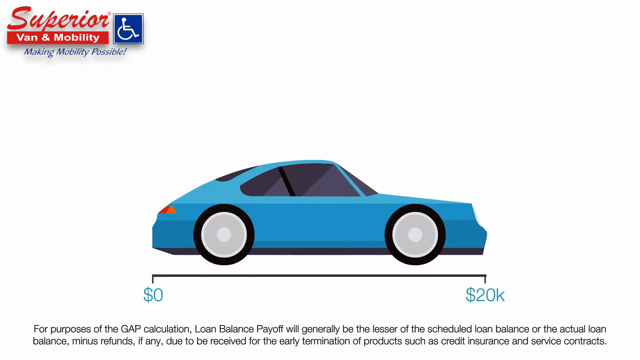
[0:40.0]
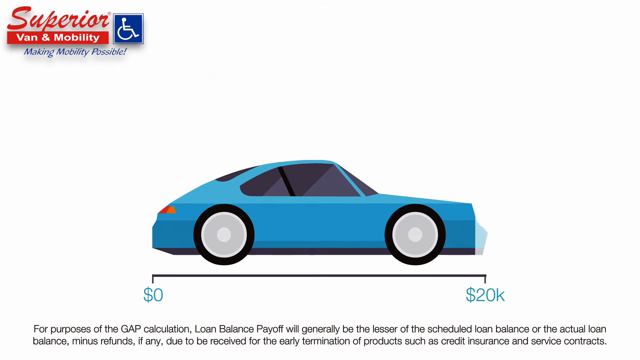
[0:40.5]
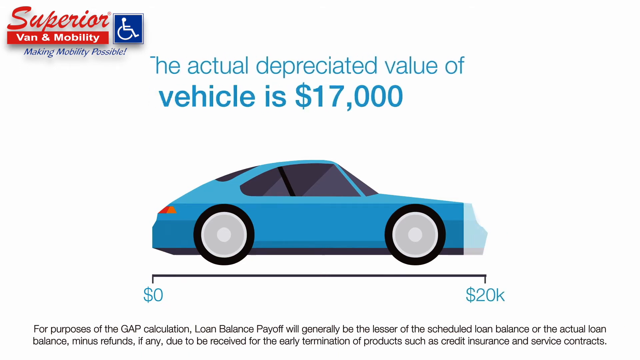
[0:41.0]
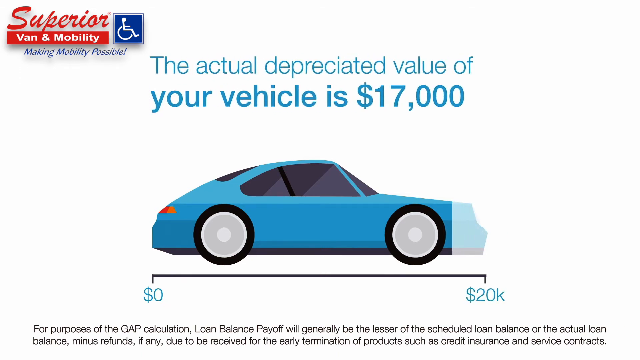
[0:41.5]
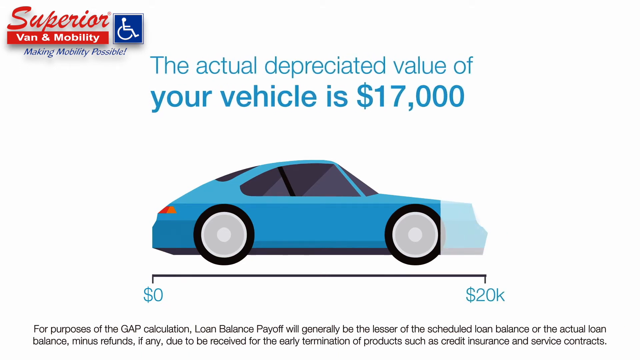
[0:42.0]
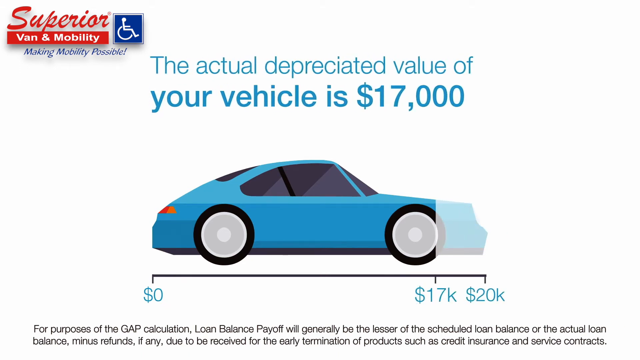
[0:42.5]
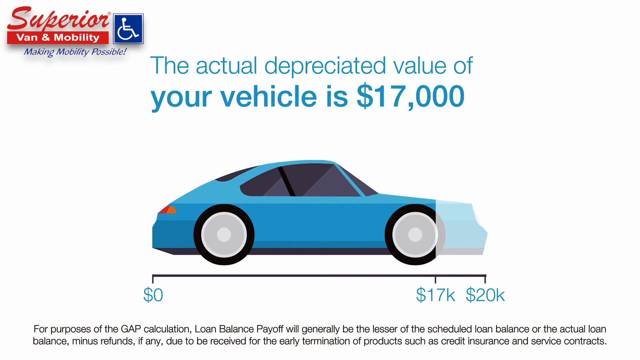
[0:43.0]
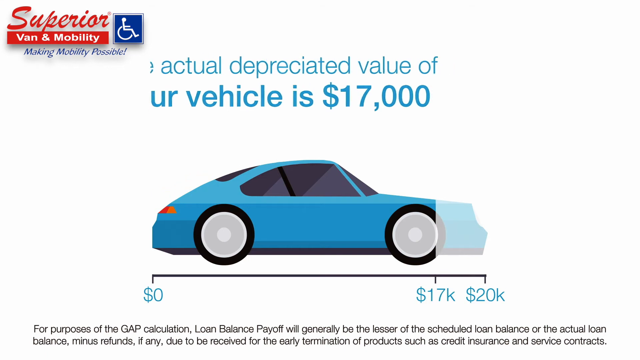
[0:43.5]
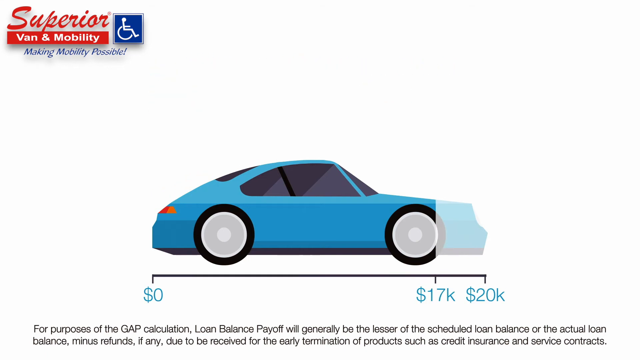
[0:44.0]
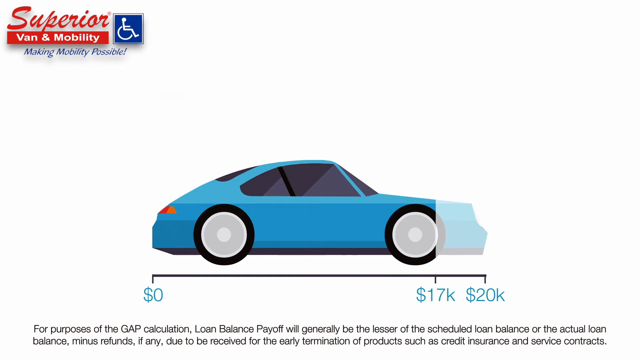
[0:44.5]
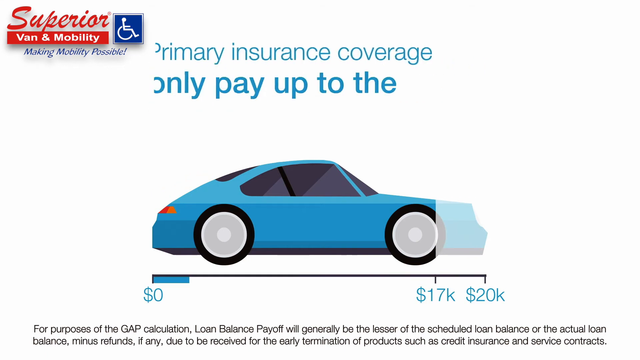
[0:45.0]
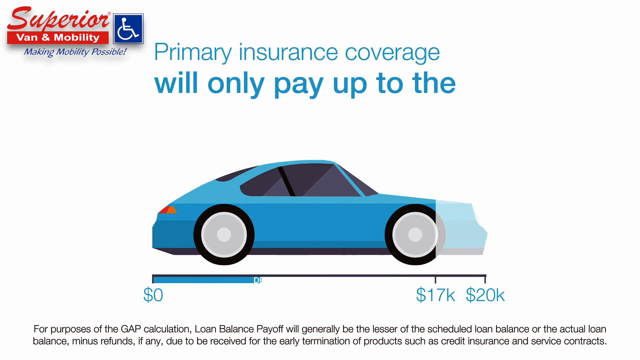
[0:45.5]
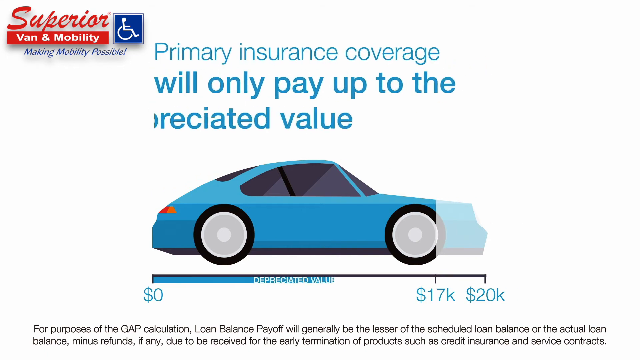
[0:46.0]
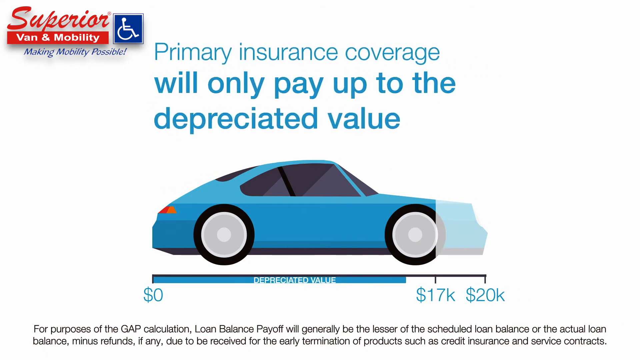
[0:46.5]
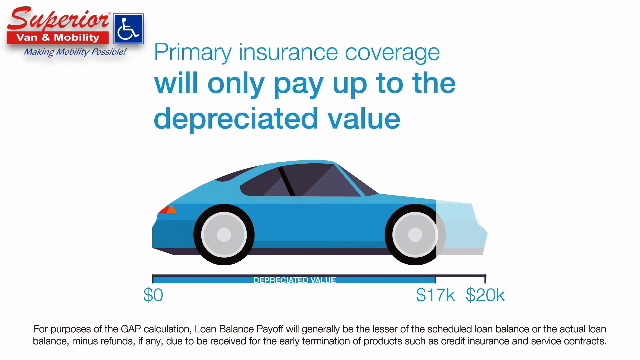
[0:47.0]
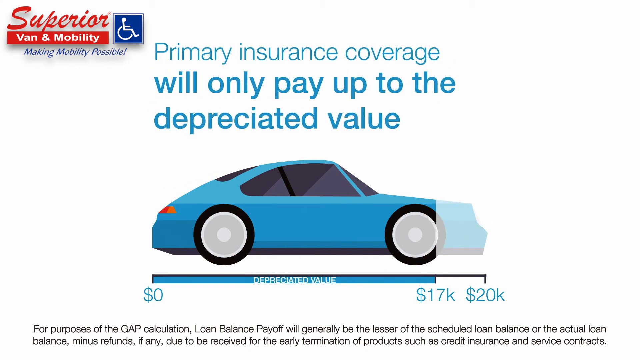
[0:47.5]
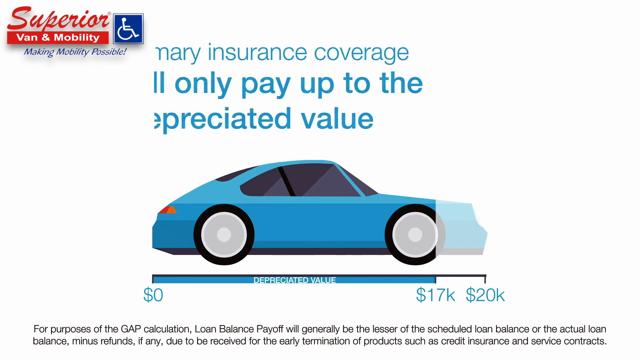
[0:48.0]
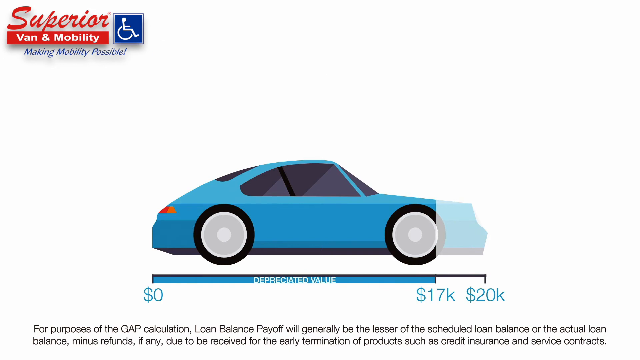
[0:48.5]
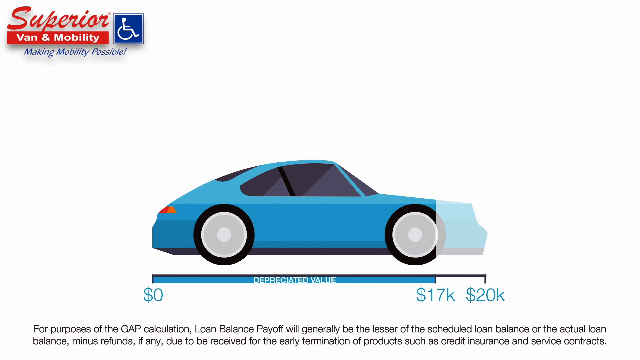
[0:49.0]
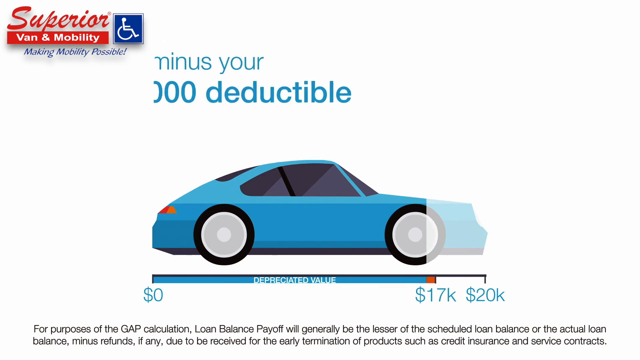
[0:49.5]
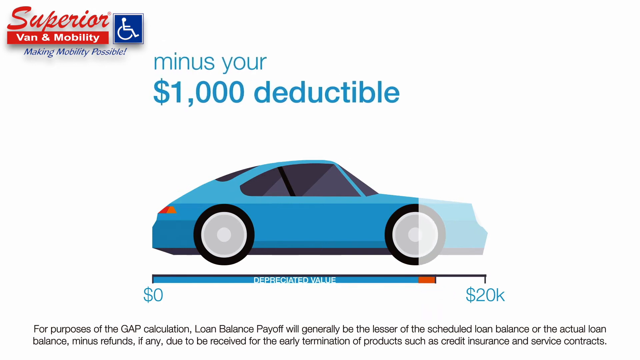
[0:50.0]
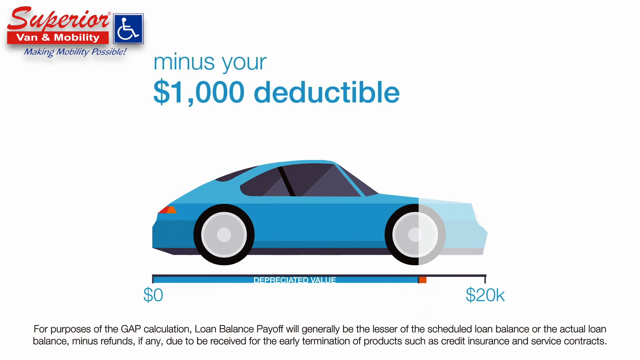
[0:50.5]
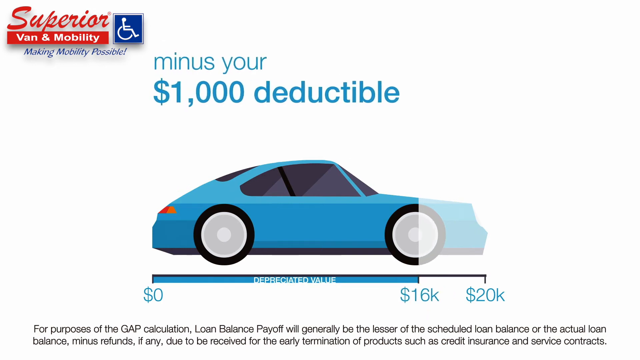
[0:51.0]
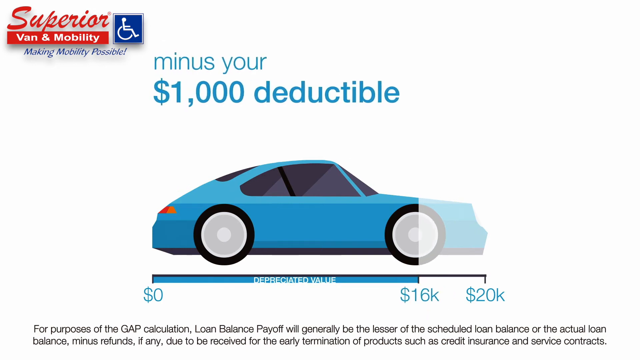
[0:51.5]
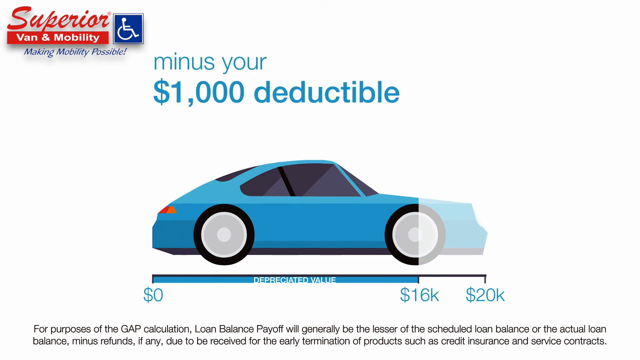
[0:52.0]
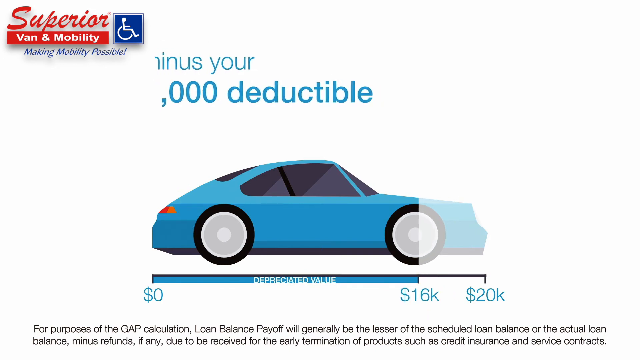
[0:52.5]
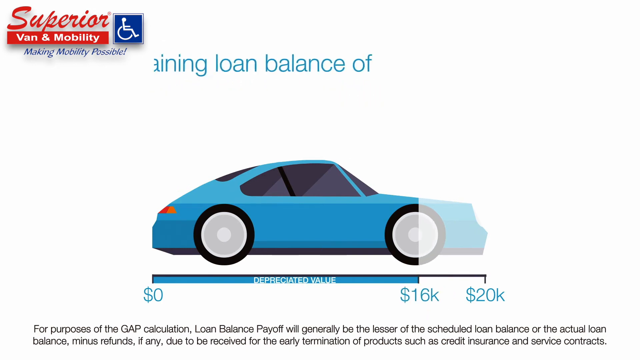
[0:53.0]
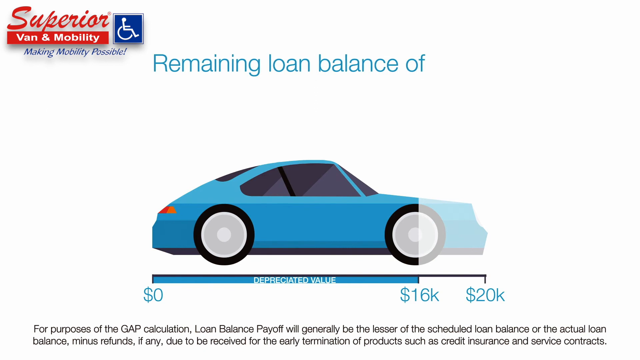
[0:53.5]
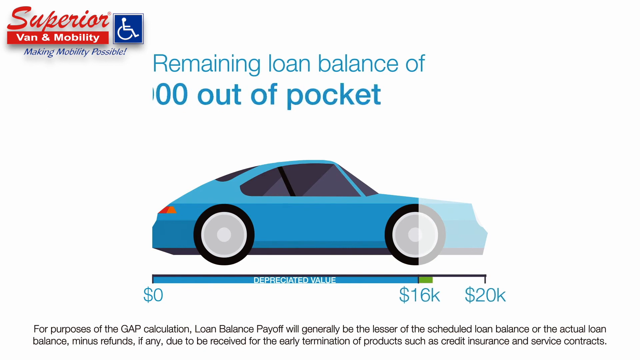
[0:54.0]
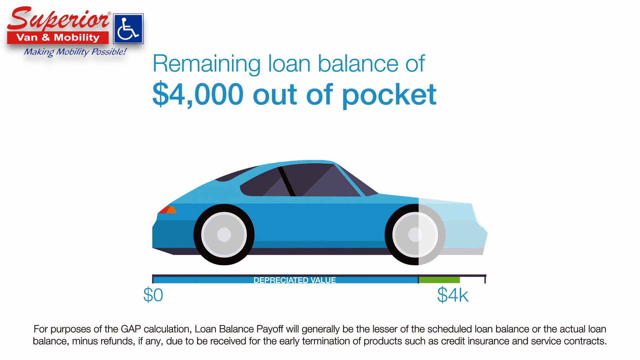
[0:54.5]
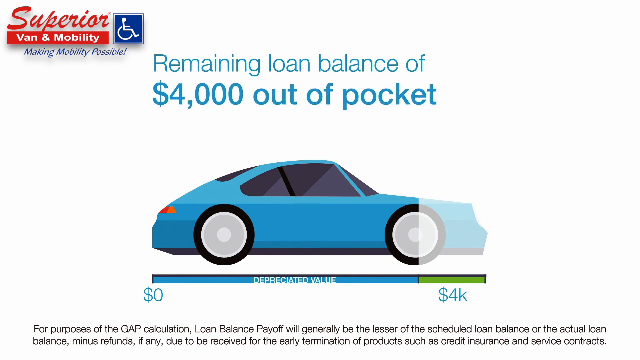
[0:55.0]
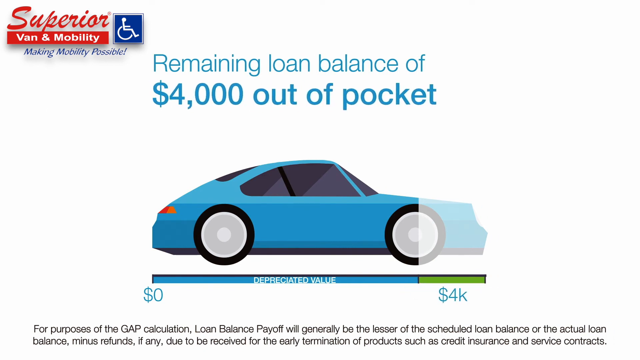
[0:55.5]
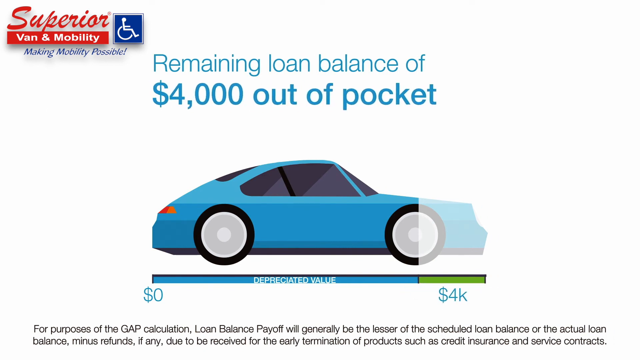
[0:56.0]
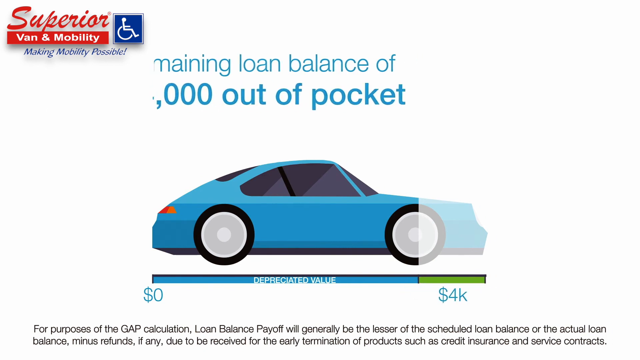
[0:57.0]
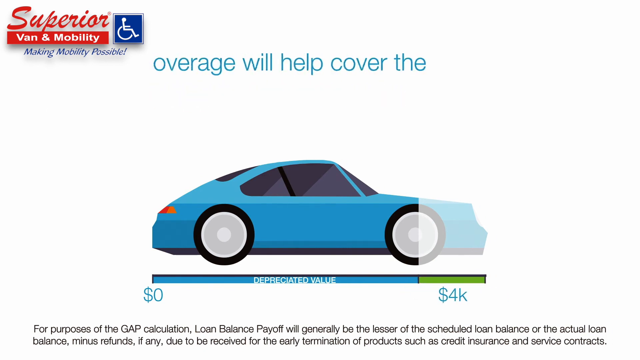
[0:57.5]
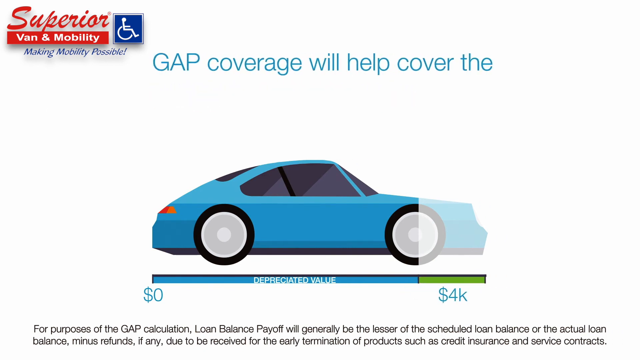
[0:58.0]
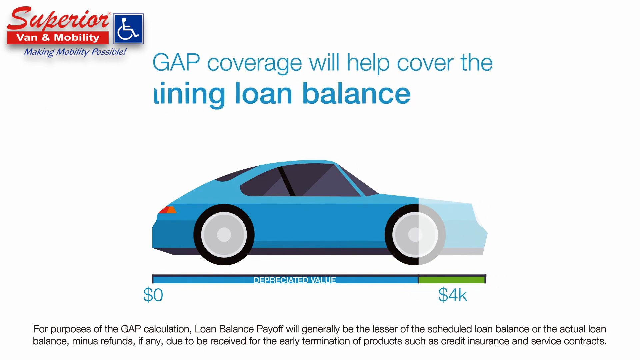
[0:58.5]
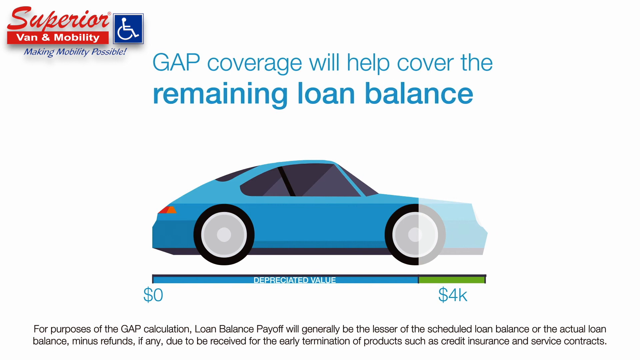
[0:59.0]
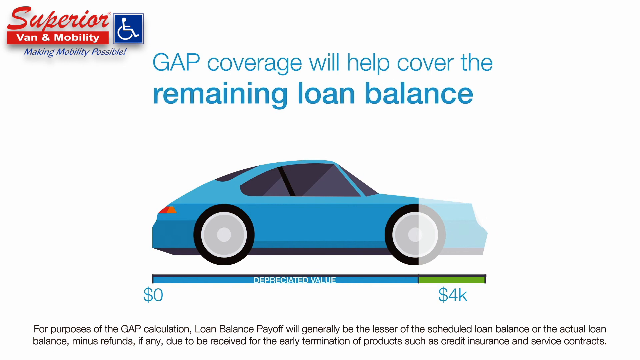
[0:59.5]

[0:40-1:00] On a white background there is a car at the center, with "superior mobility" at the top left. The top reads "the actual depreciated value of your vehicle is $17,000," and the text swipes to the left. At the bottom right is "$20,000." The top then reads "primary insurance coverage will only pay up to the depreciated value," and below it shows "$0" to "$17,000 depreciated value." Blue text at the top reads "minus your $1,000 deductible," and the figure at the bottom right moves further left, showing "$16,000." Text moves from left to right: "remaining loan balance of $4,000 out of pocket." At the bottom right, the $16,000 and $20,000 go away and a green bar fills in, showing "$4K." The top left then reads "gap coverage will cover the remaining loan balance." The animation has fine print text for the loan calculation at the very bottom.